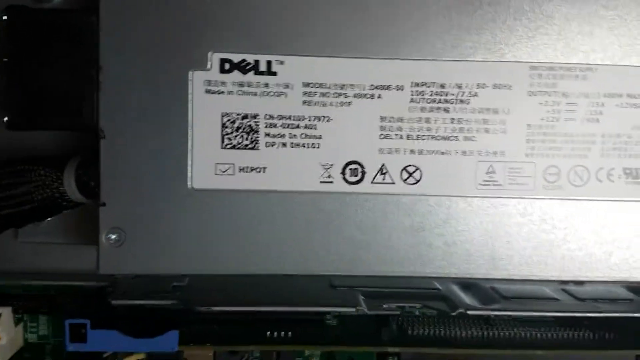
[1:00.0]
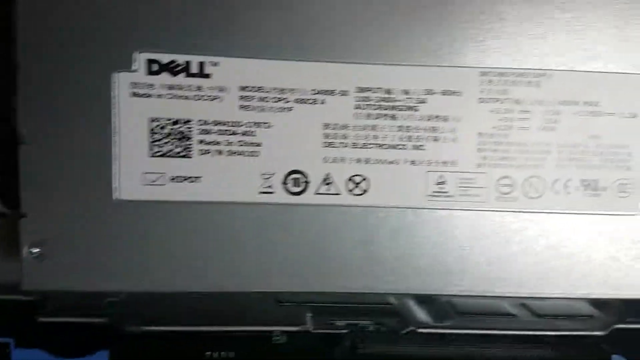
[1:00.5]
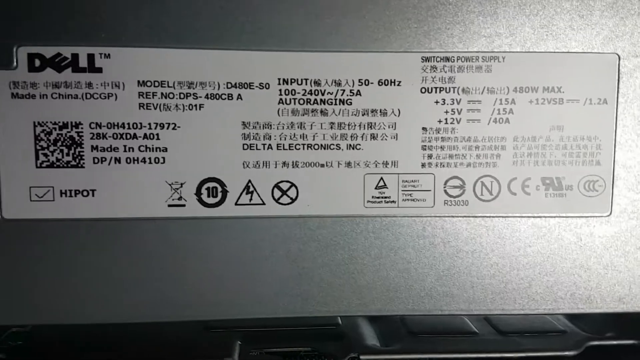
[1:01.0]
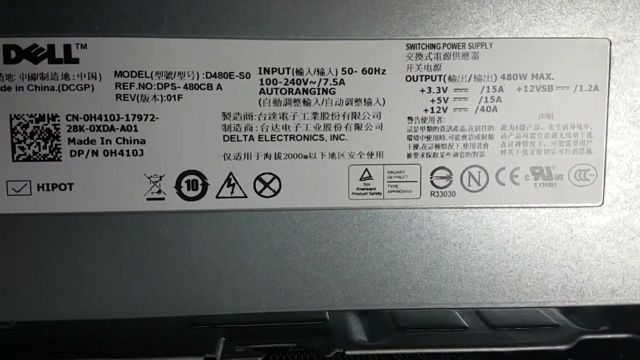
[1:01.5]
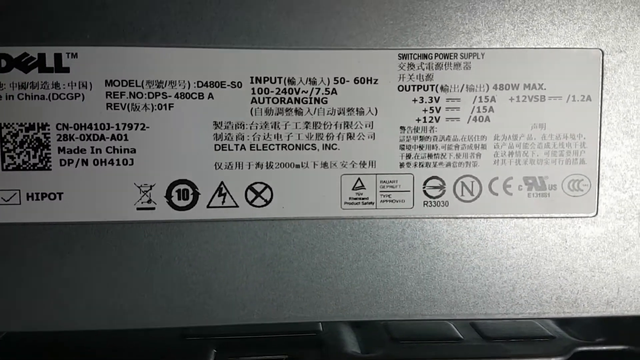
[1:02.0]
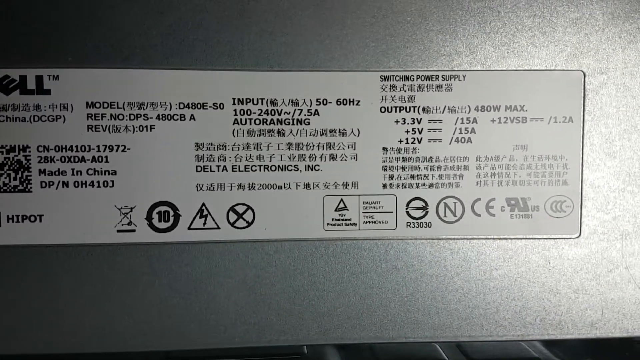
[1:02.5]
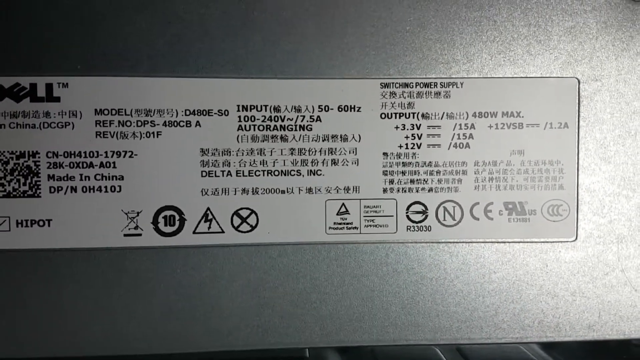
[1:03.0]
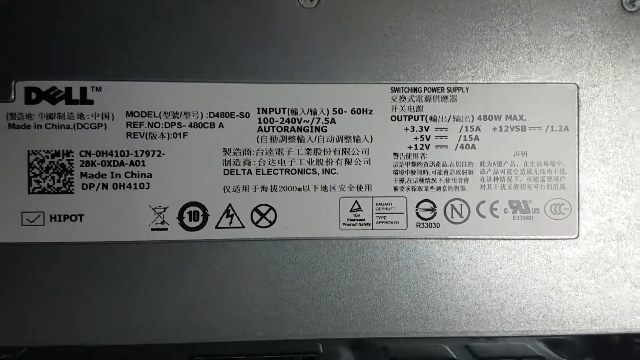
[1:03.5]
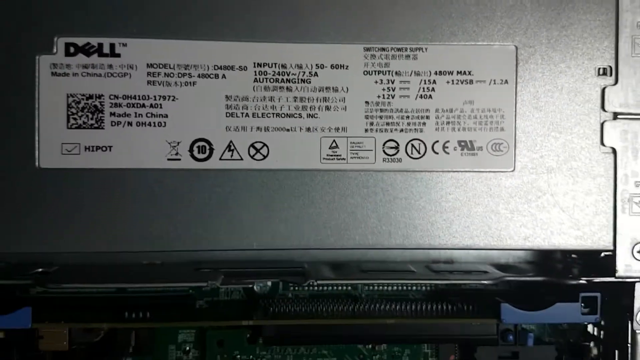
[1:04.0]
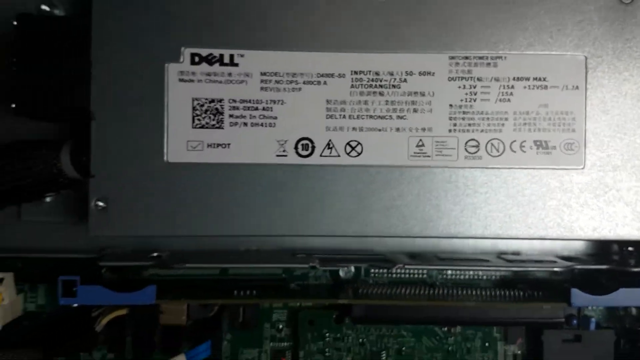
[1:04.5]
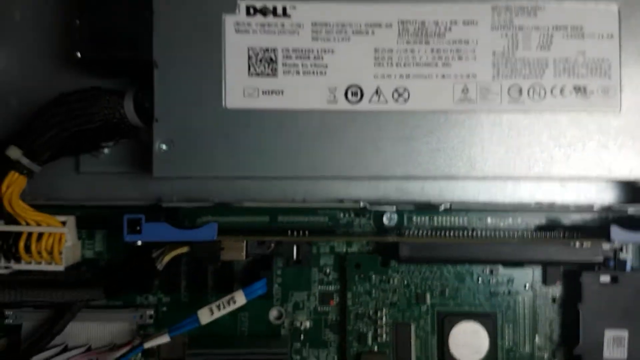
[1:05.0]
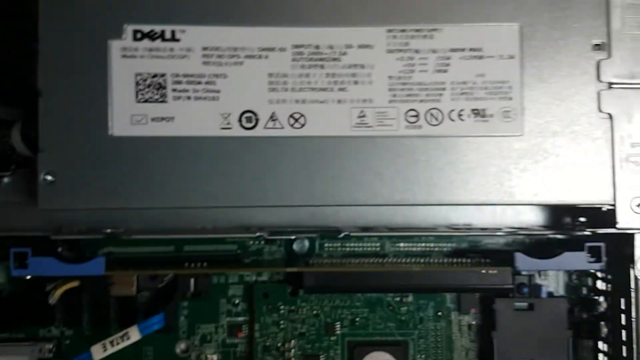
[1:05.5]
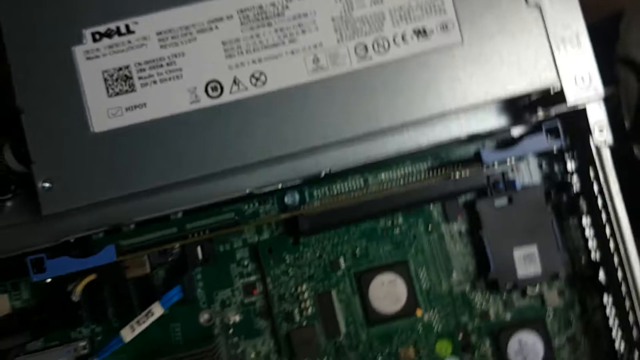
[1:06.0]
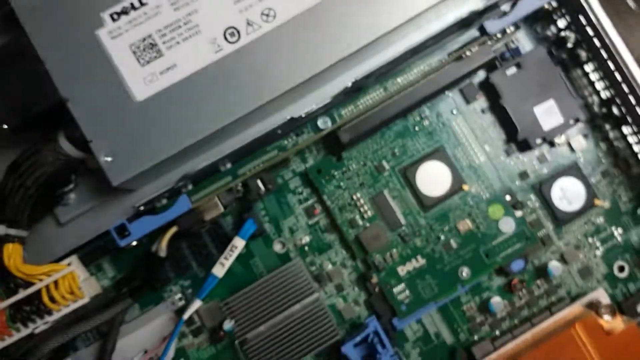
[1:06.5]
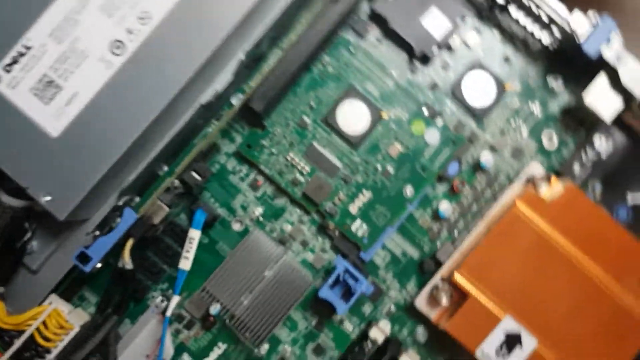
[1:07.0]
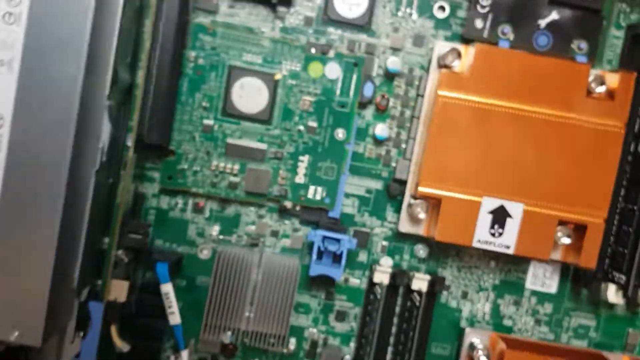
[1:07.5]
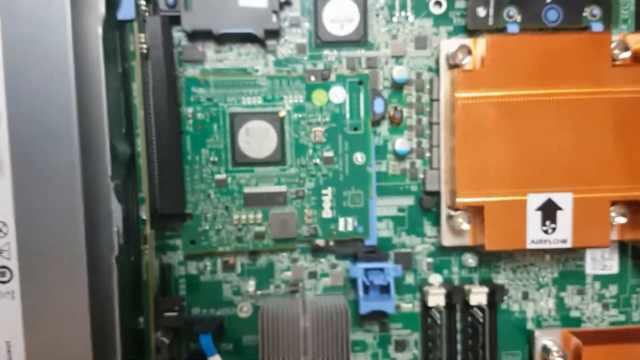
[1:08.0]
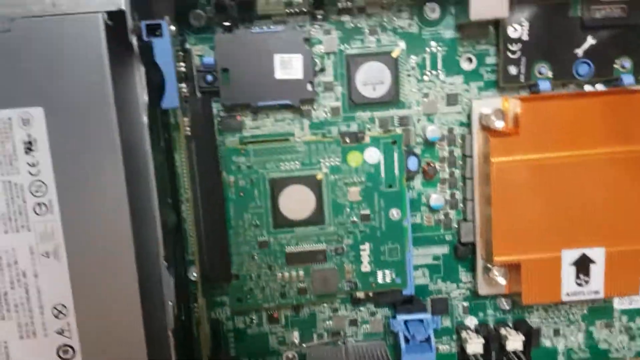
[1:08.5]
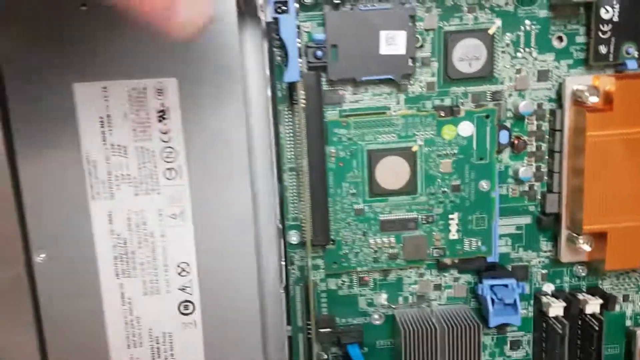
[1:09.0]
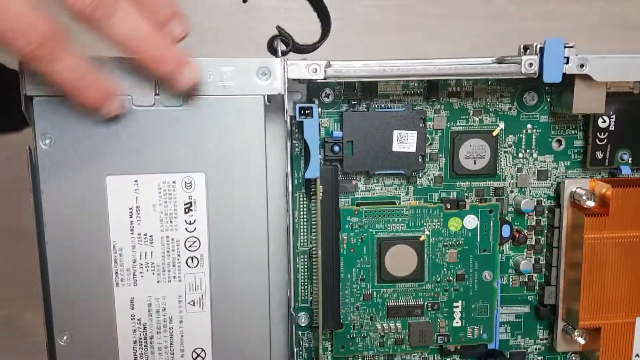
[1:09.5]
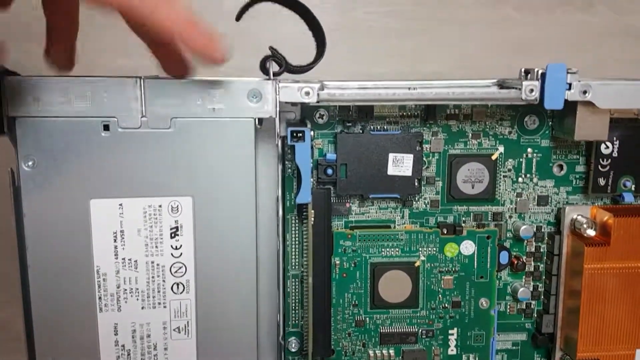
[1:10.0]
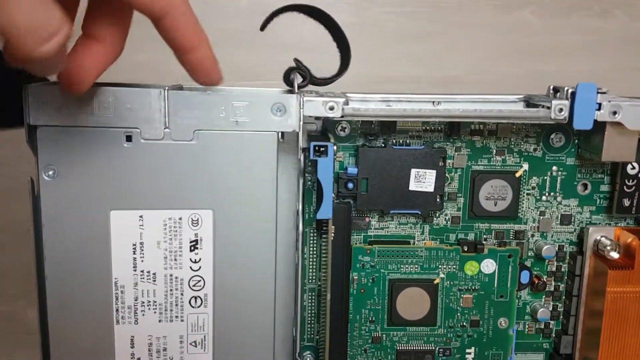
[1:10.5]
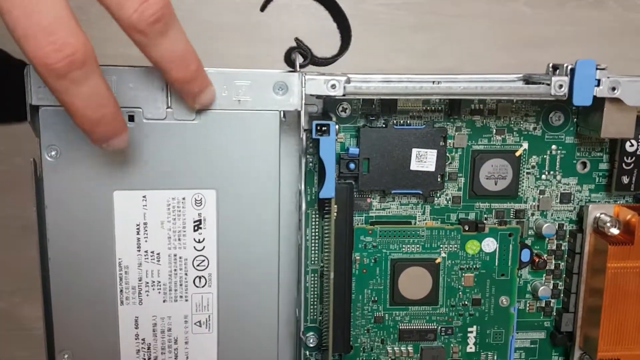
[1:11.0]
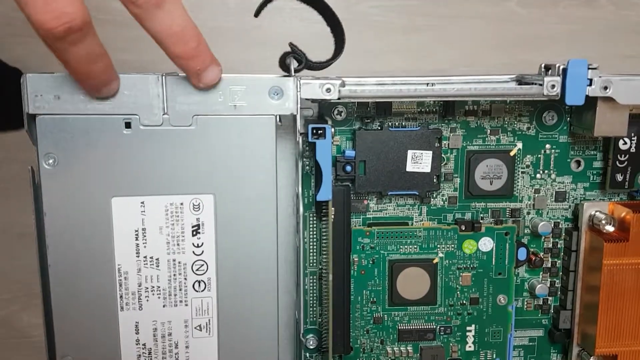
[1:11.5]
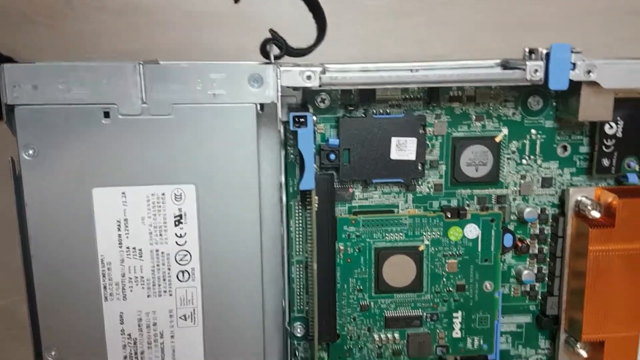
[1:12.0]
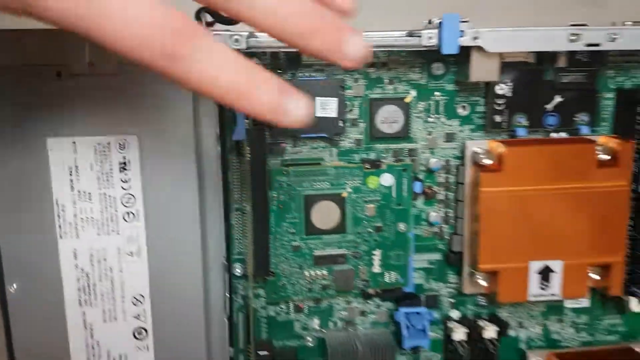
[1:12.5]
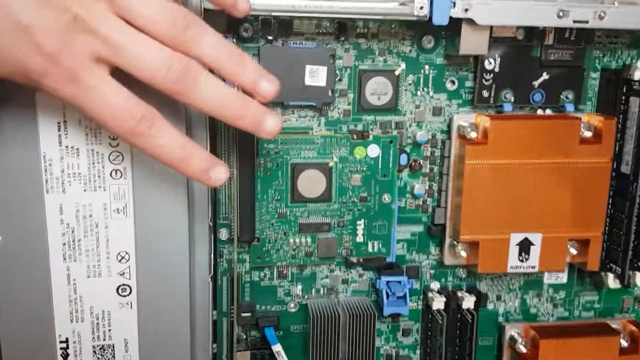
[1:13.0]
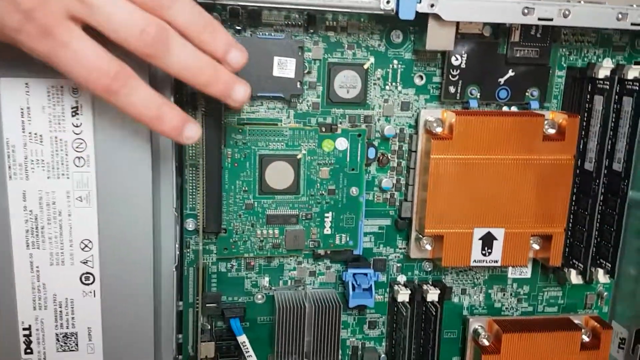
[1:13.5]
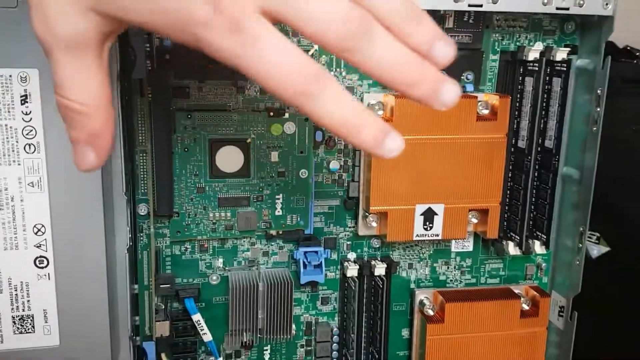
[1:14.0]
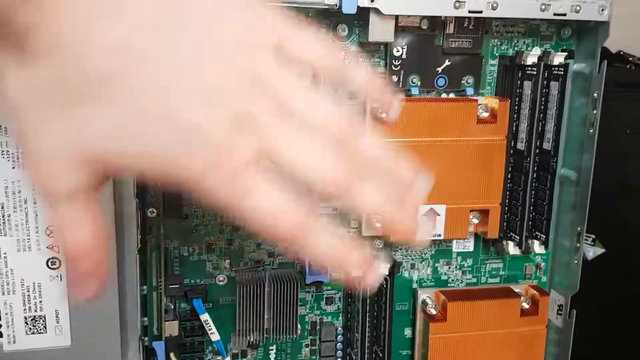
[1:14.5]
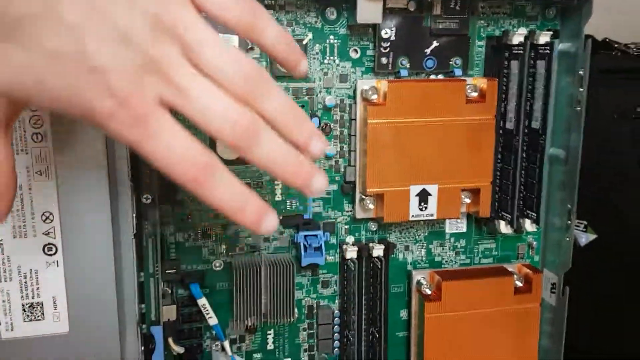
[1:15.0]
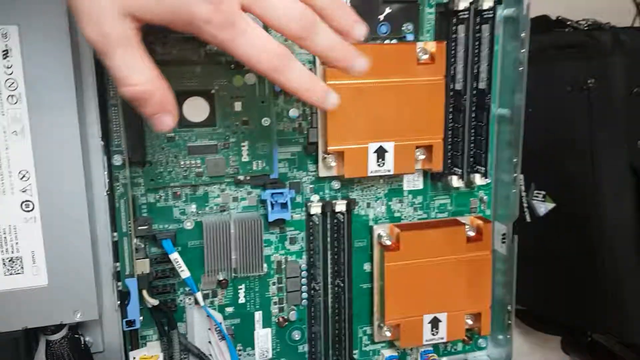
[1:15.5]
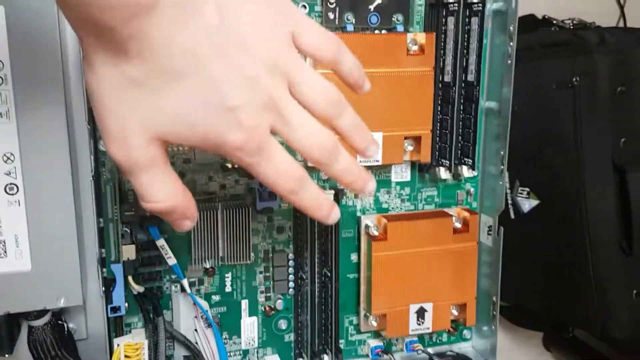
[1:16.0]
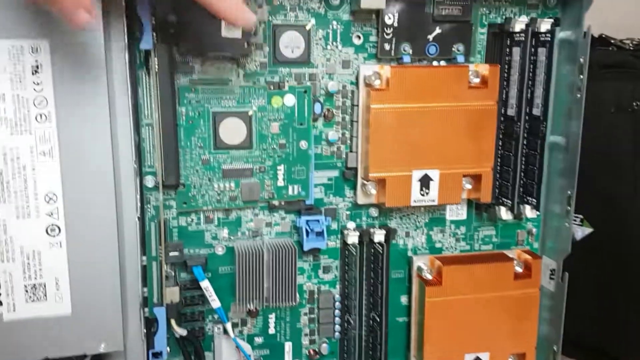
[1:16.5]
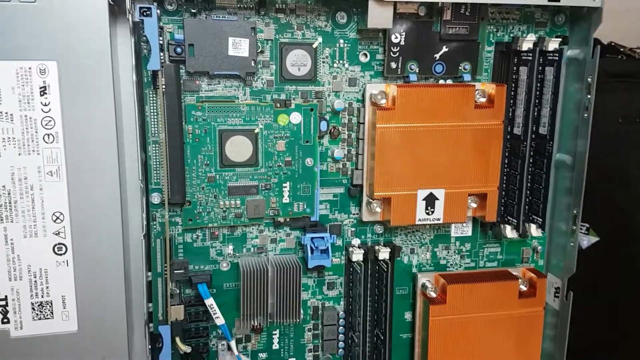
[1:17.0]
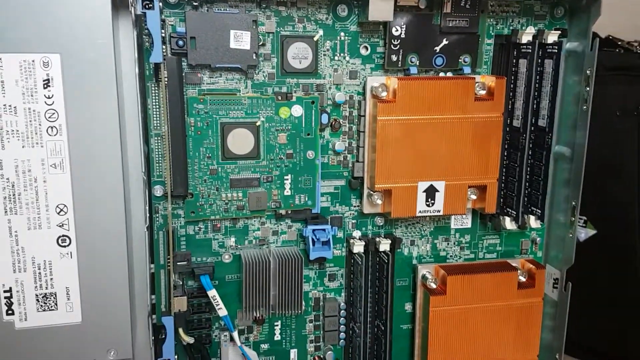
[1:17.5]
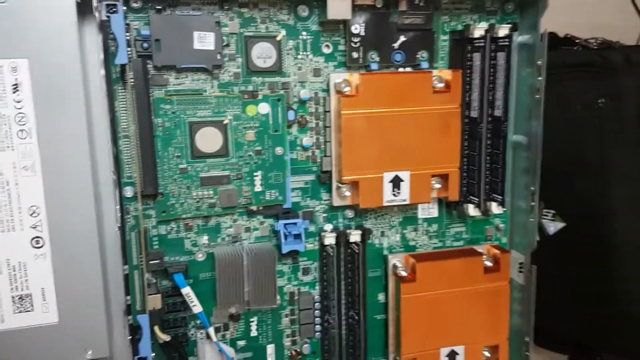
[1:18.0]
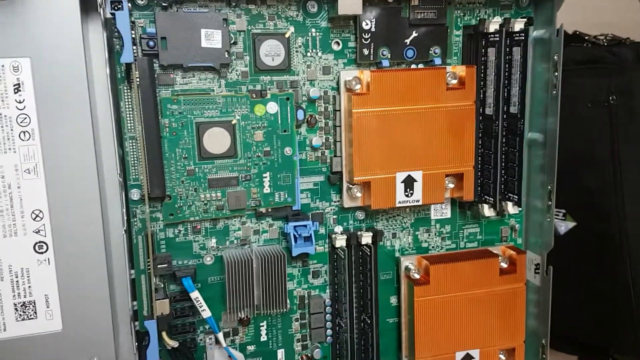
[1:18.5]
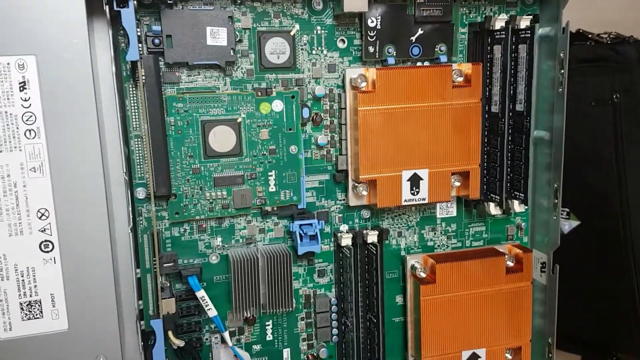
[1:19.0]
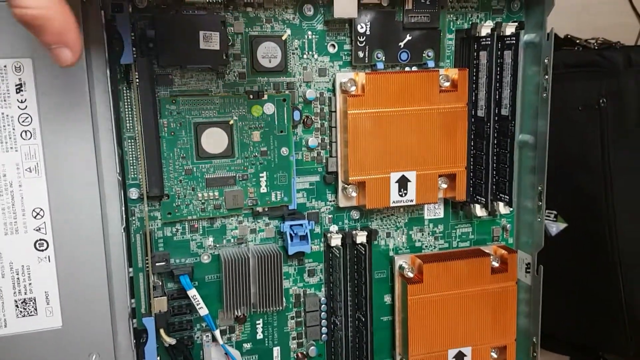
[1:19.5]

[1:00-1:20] A sticker on the metal surface at the back of the server is examined. It appears to carry manufacturing and product information: the Dell logo is clearly visible, with text below it that is harder to read, and there is model information and information suggesting the product was built in China. At the bottom of the sticker are various logos in triangles and circles and with lines through them. The view then returns to the motherboard. The man touches the casing with his left hand, then hovers his hand over the motherboard, appearing to explain what is shown. The motherboard is visible with its components, casings, RAM and processors.